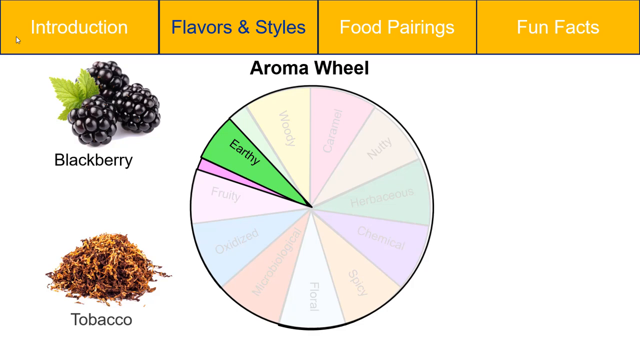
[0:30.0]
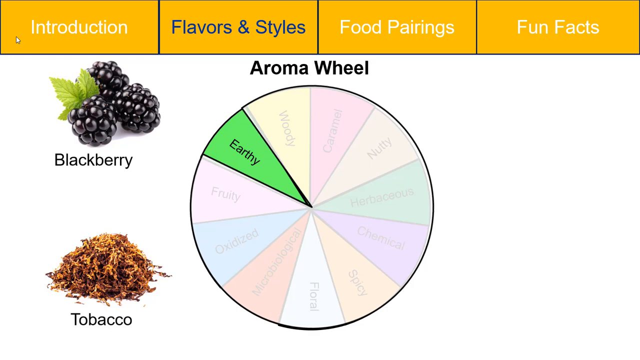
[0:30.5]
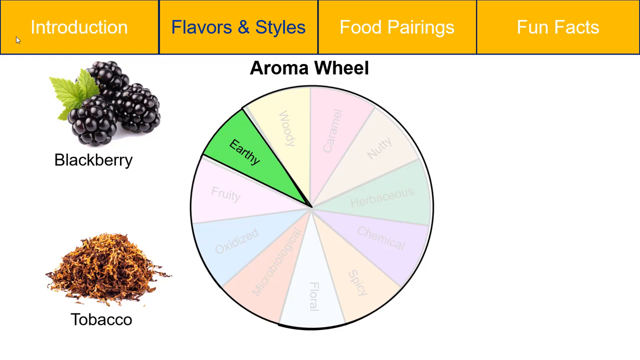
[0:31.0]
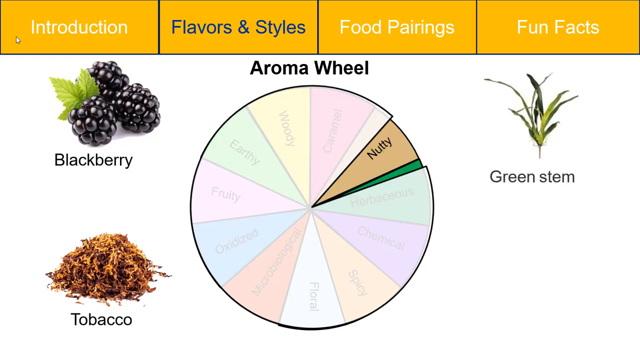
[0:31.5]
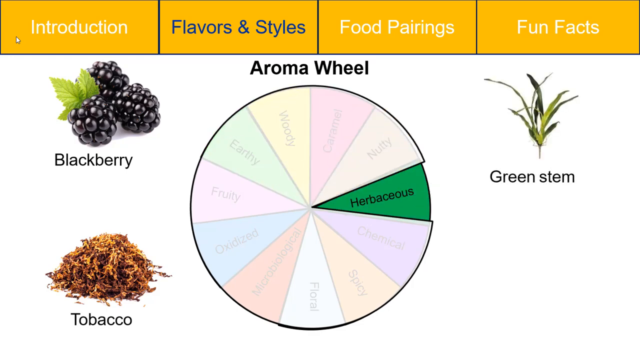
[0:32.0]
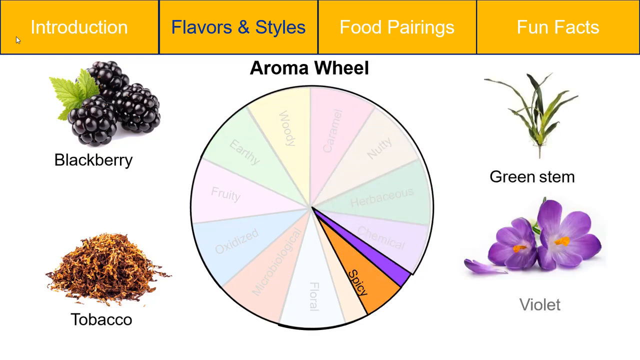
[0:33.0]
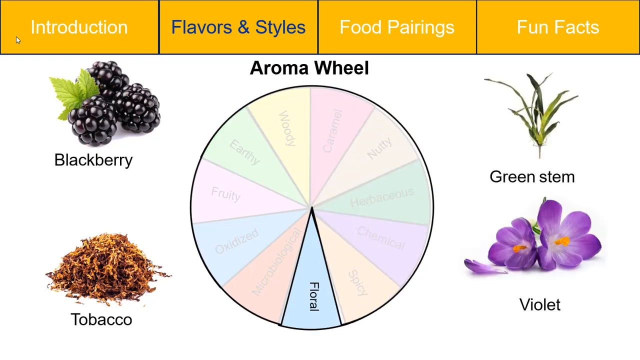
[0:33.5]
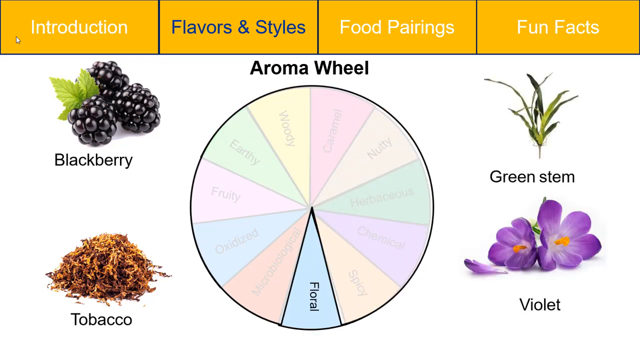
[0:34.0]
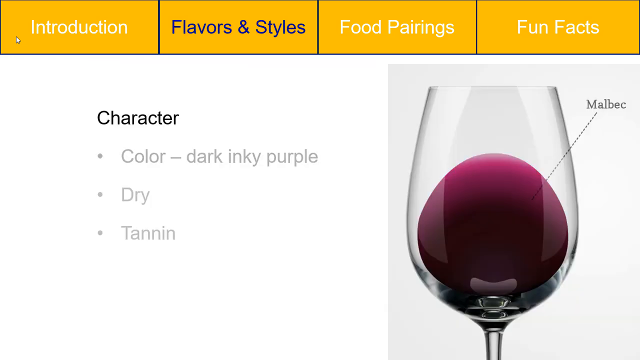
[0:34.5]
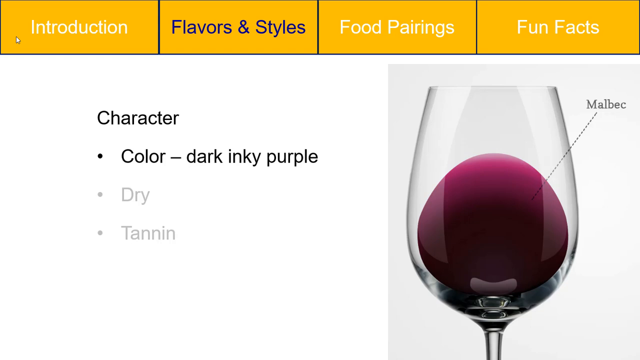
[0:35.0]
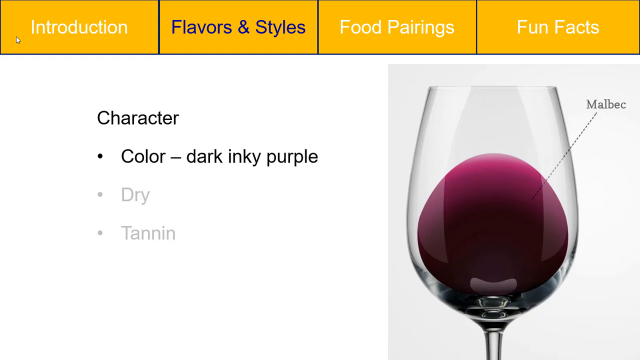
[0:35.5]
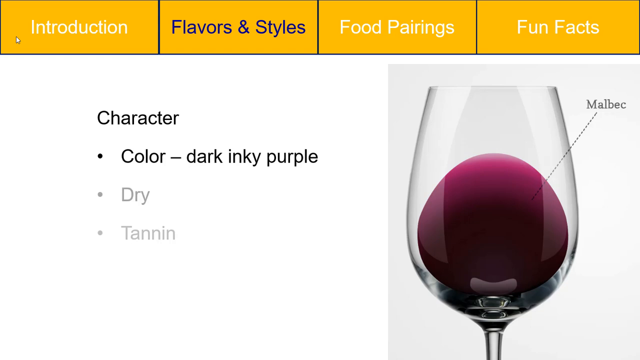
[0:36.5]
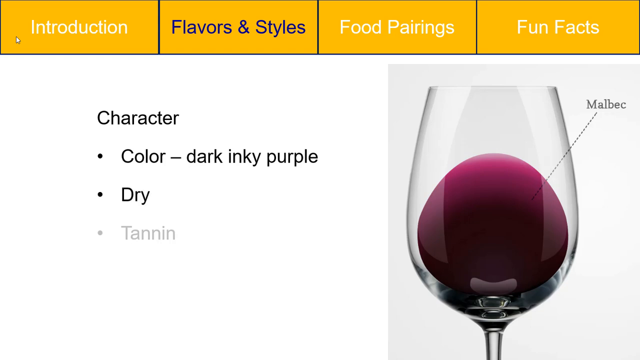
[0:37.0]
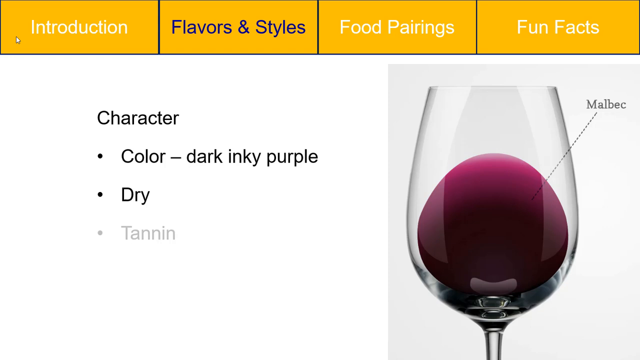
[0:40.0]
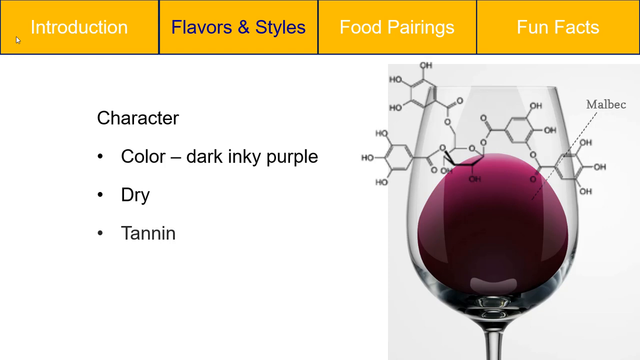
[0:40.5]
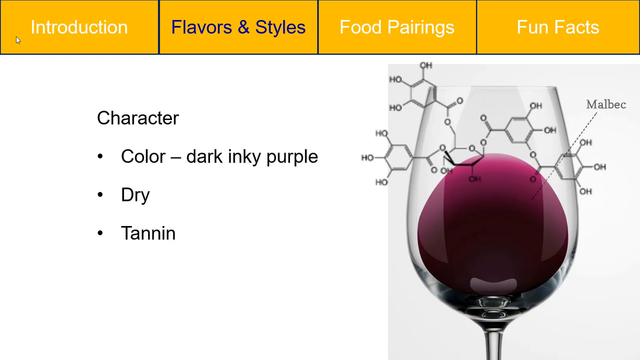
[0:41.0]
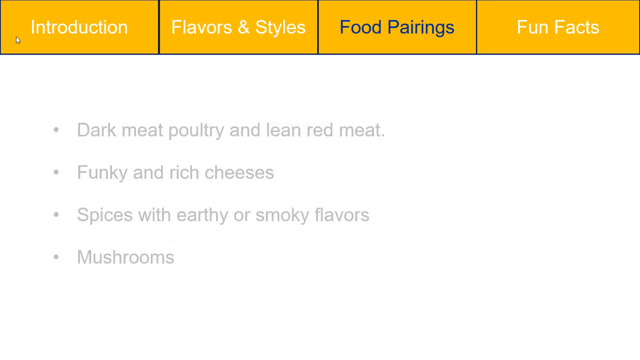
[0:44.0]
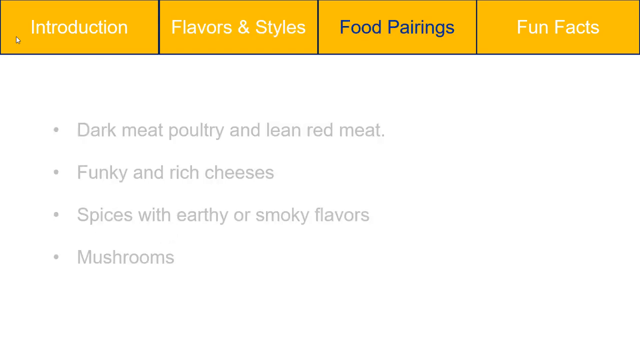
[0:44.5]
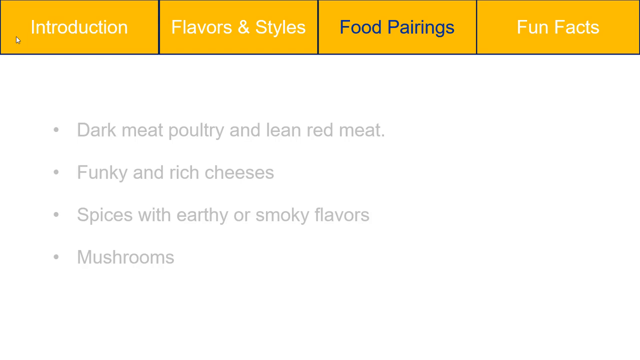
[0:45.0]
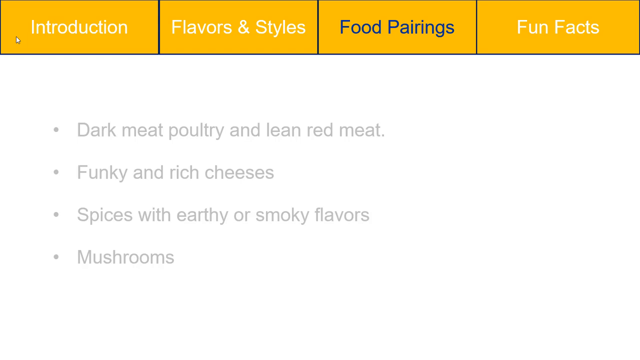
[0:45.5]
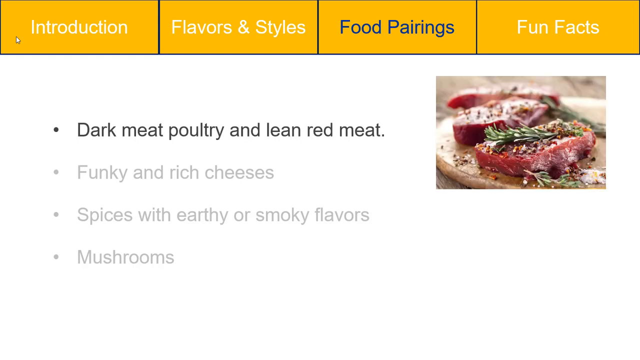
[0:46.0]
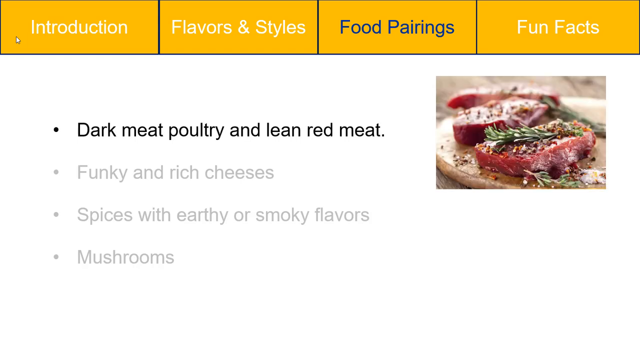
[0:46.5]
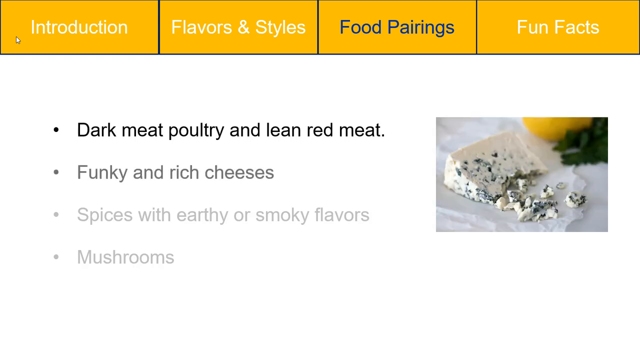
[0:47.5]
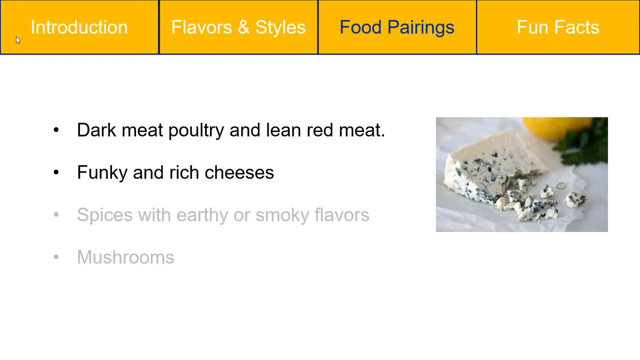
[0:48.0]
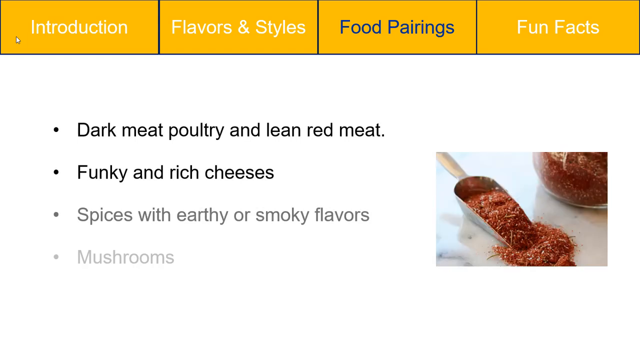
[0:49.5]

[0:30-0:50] The wheel keeps spinning as a green stem and violet appear on the right side of the screen; violet shows a flower, and green stem shows a plant above it, both labeled. The wheel continues to spin and stops on the word "floral," a light blue piece at the bottom of the wheel. The screen then switches to another image under flavors and styles: a glass of Malbec, with the wine visible in the glass. On the left is white text reading "character, color, dark inky purple, dry, and tannin." When tannin becomes ungrayed, an image pops up above the wine glass. The screen then switches to food pairings, where pieces of text become ungrayed and images appear while the given piece of text is darkened. When "dark meat, poultry, and lean red meat" darkens, an image of that appears on the right, and when "funky and rich cheese" darkens, an image of that appears on the right.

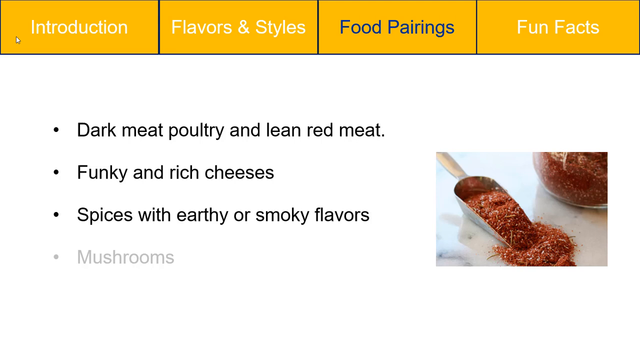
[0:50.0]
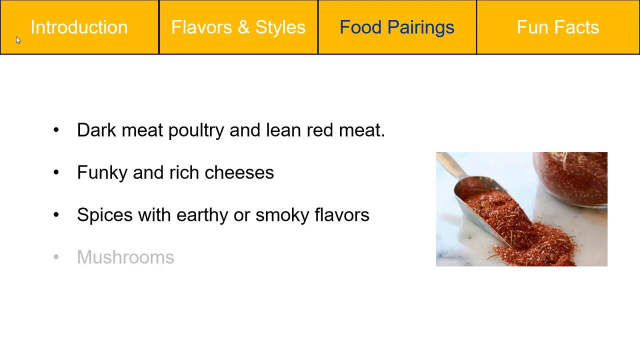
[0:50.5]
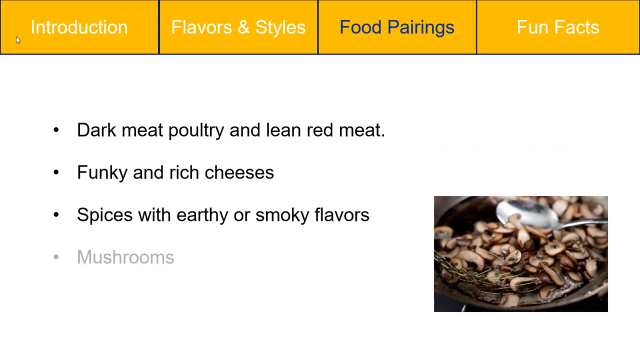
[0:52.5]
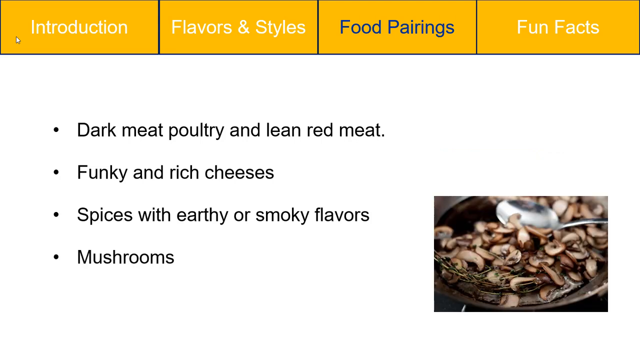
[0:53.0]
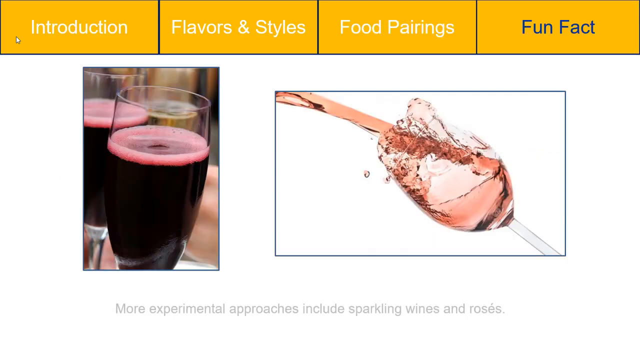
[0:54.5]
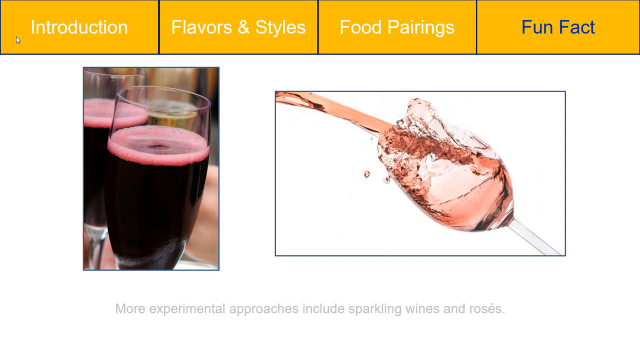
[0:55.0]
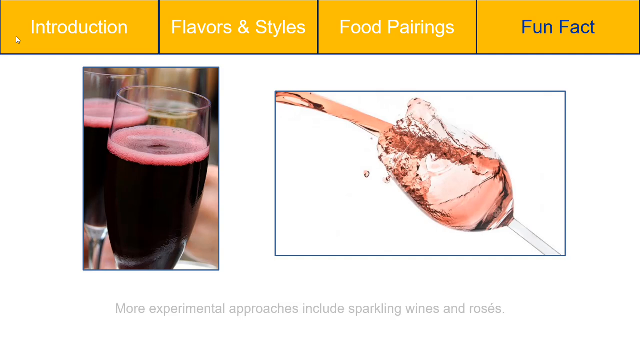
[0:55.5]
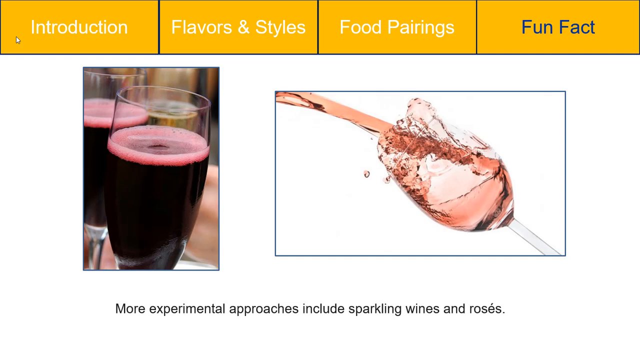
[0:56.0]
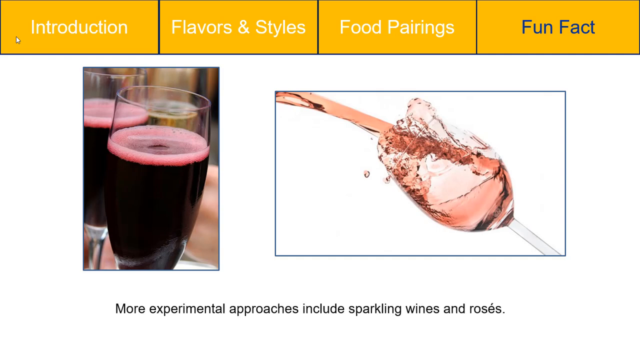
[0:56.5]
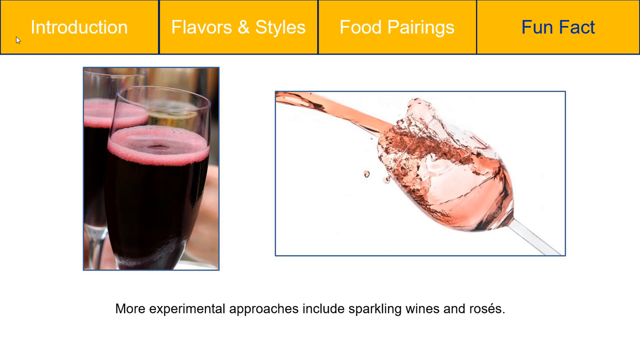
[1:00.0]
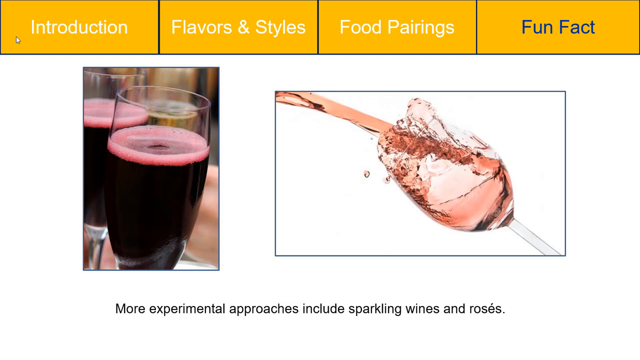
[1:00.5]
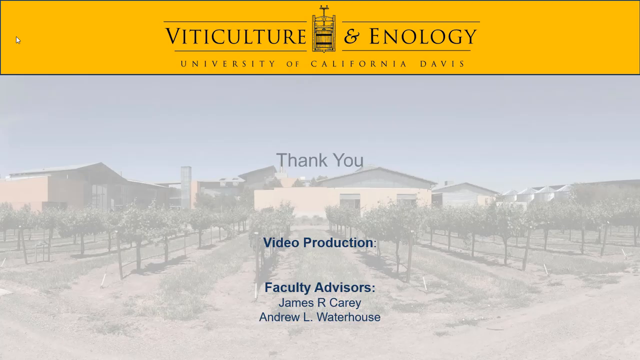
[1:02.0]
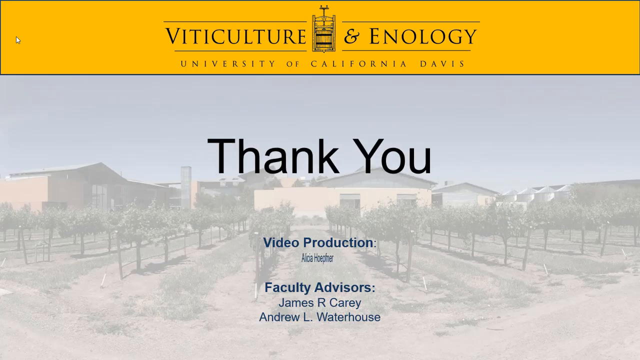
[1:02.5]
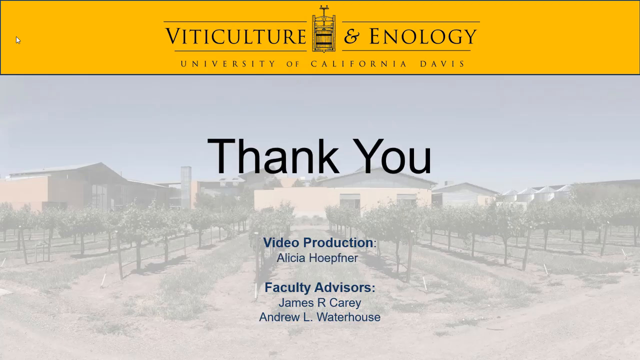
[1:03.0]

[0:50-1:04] More of the text darkens. A line about spices with smoky flavors darkens and an image of spices appears on the right, and finally mushrooms darkens and an image of mushrooms appears. The video then switches to the next slide, fun fact, which shows images of wine with text underneath. The left image shows two glasses of red wine, with what looks like a white wine in the back. On the right of the screen, wine is poured into a glass, splashing as it goes in. This screen stays until it changes back to a screen with the yellow bar at the top showing "VitiCulture and Enology, University of California, Davis." The text "thank you" comes up in the middle of the screen, and the background of that area shows some houses and plants in the back. Information about the video production and faculty advisors appears at the bottom.